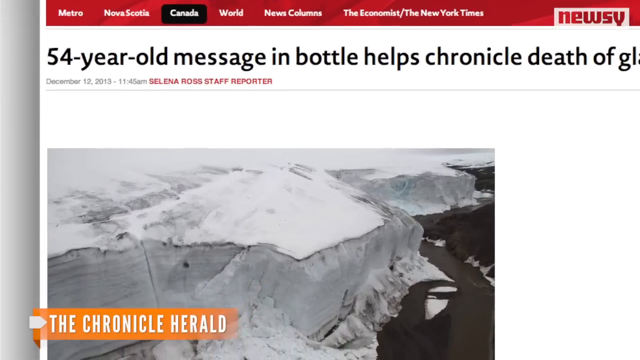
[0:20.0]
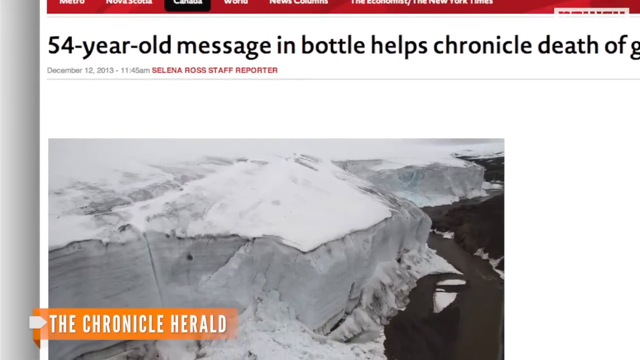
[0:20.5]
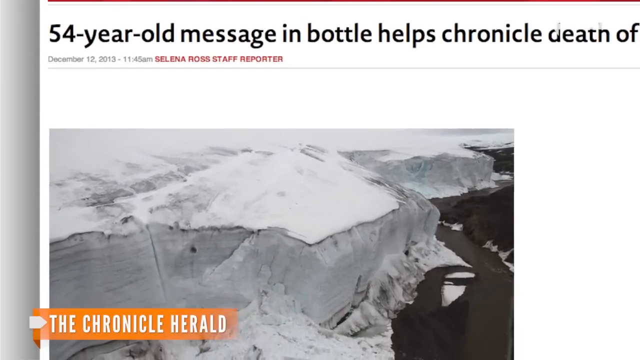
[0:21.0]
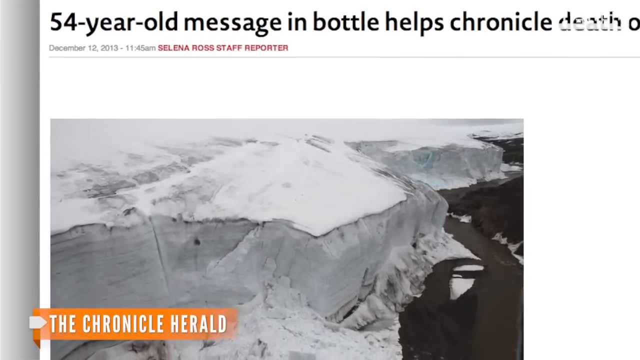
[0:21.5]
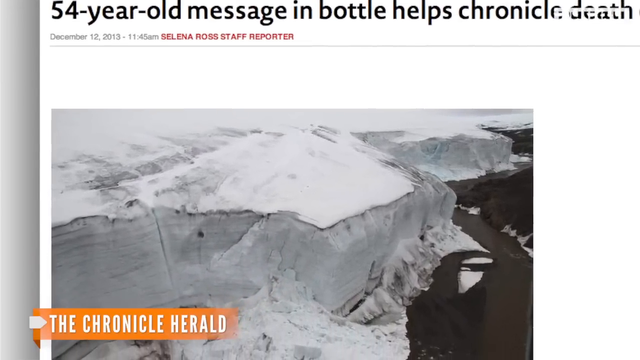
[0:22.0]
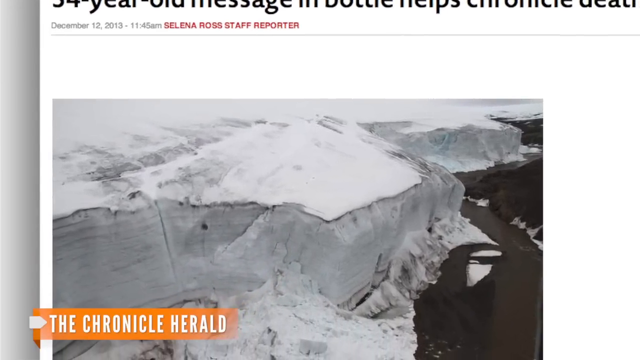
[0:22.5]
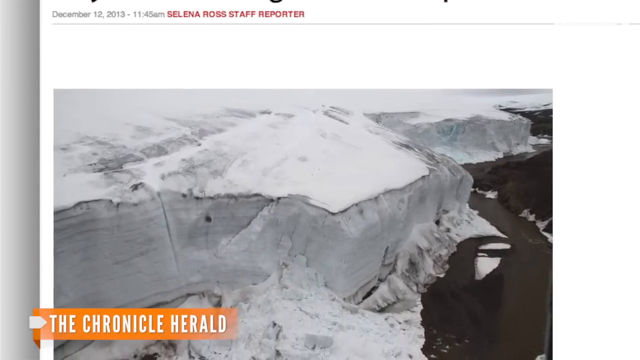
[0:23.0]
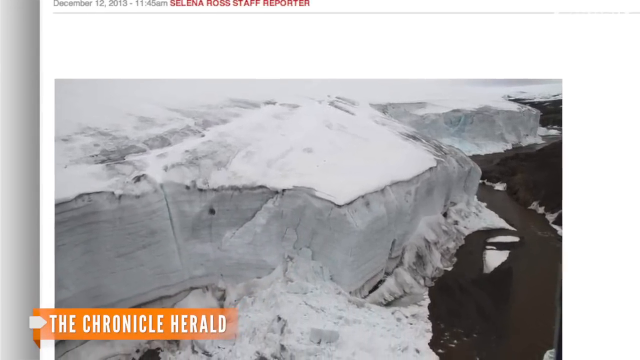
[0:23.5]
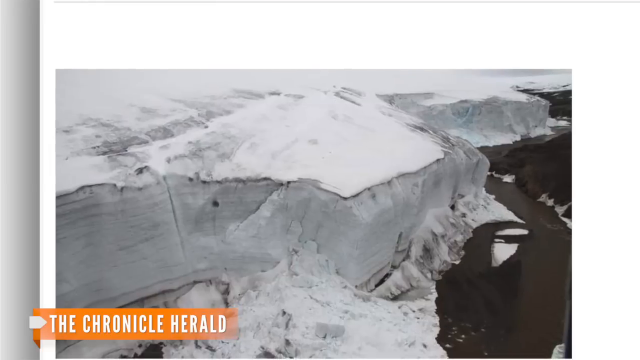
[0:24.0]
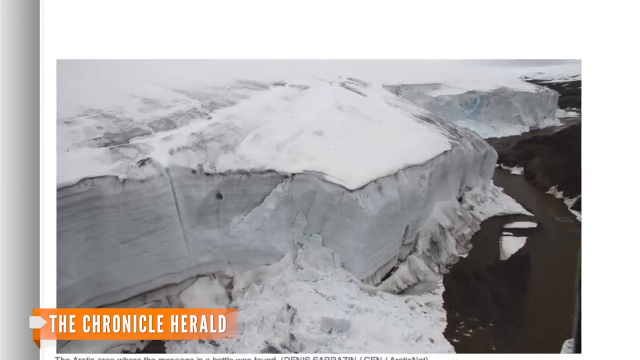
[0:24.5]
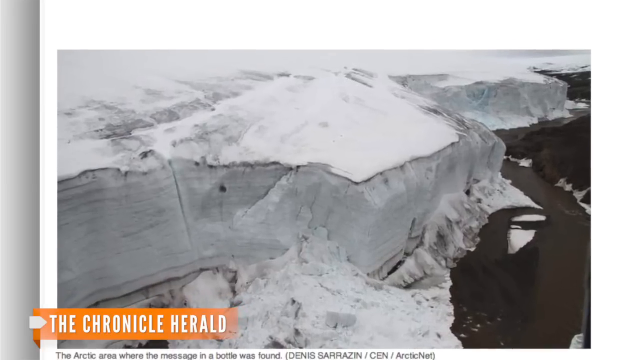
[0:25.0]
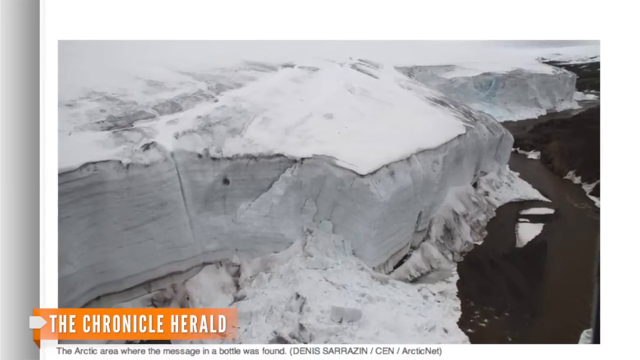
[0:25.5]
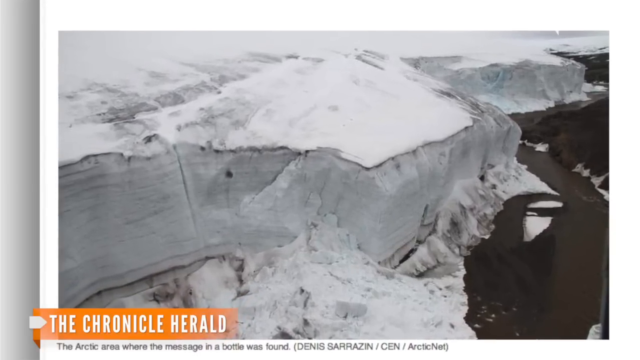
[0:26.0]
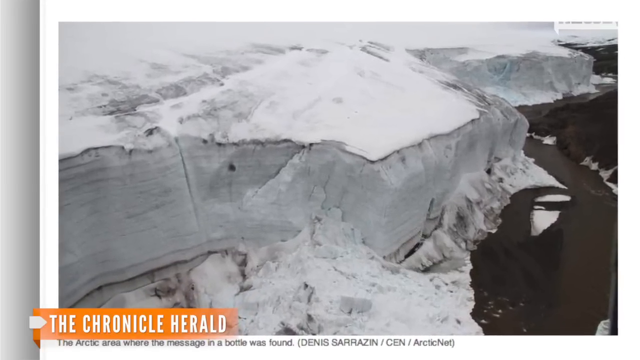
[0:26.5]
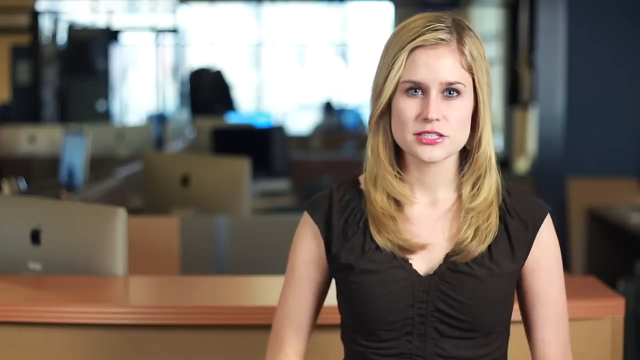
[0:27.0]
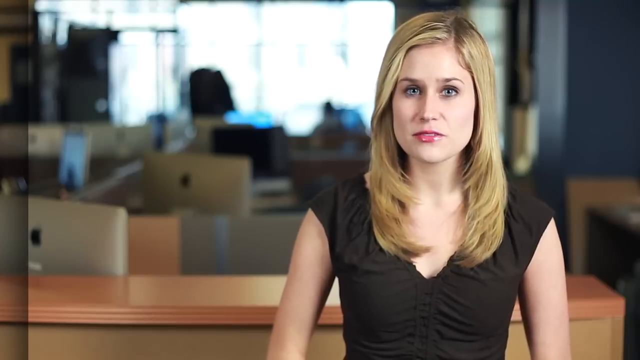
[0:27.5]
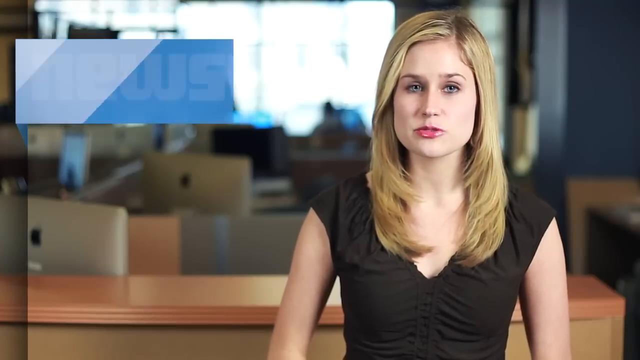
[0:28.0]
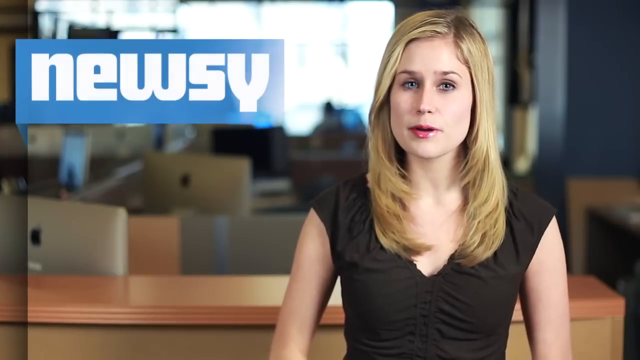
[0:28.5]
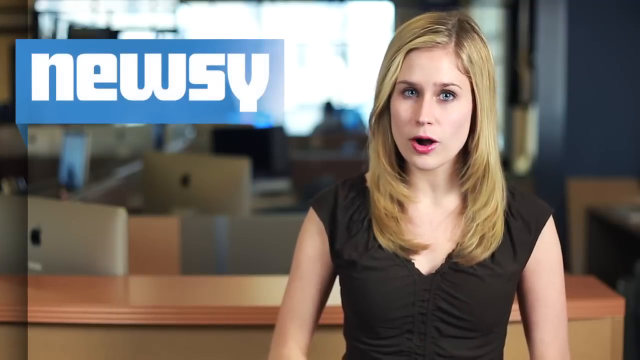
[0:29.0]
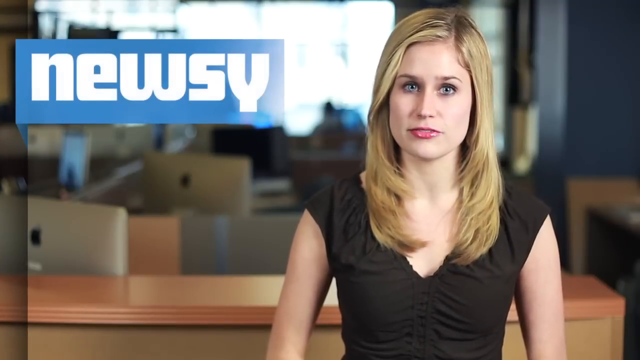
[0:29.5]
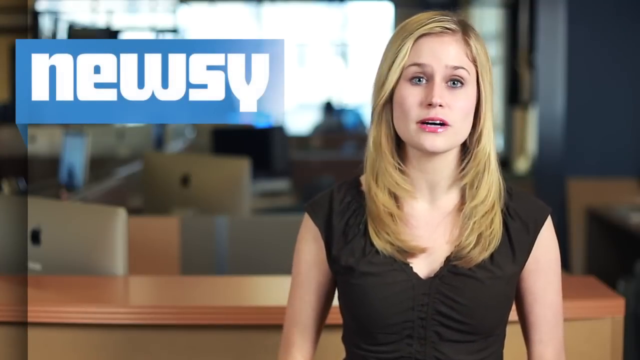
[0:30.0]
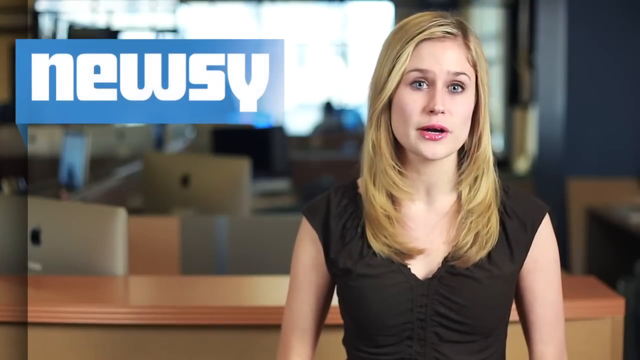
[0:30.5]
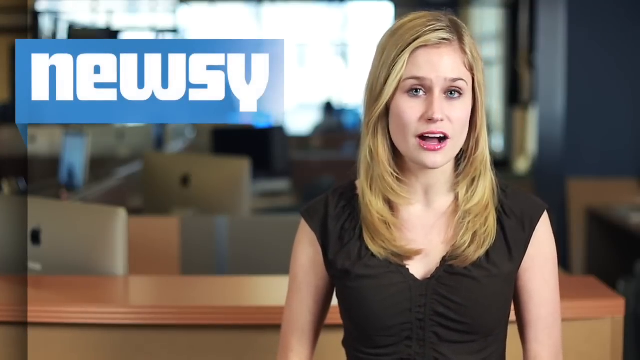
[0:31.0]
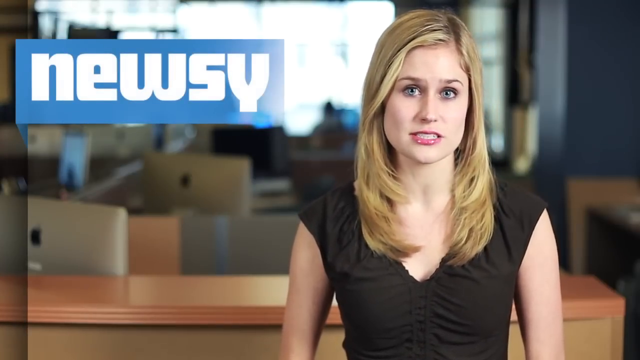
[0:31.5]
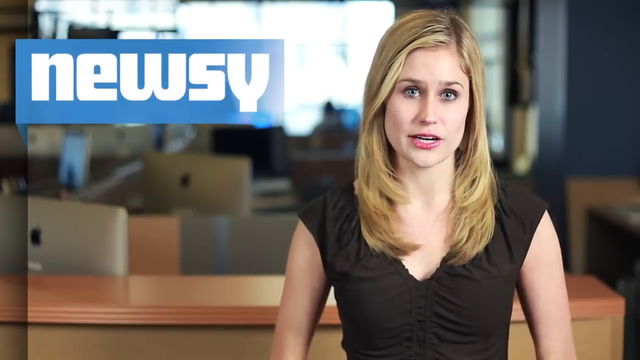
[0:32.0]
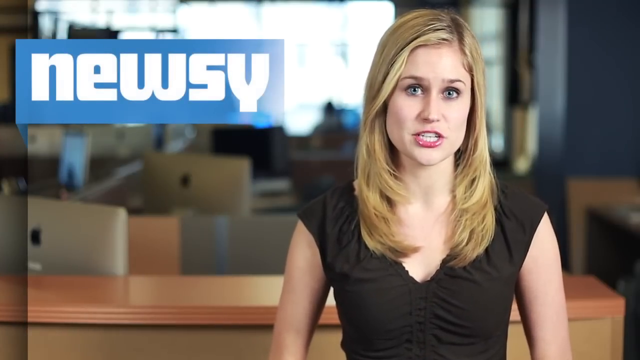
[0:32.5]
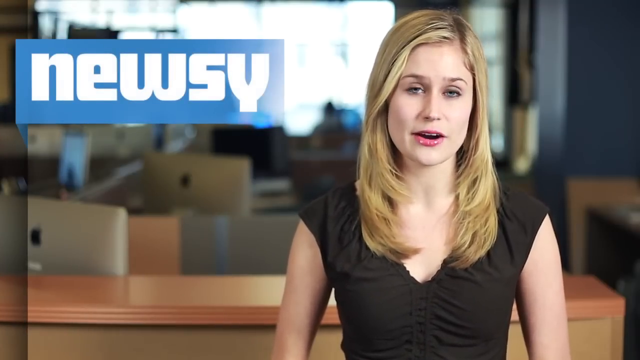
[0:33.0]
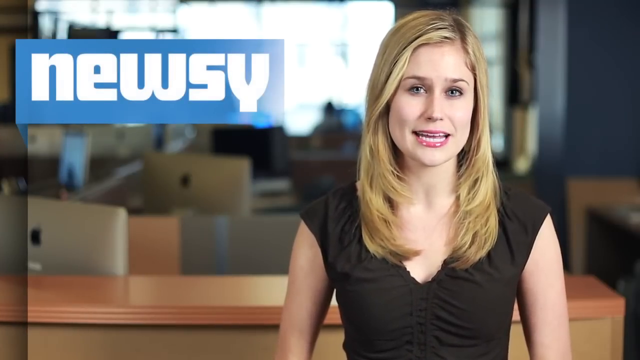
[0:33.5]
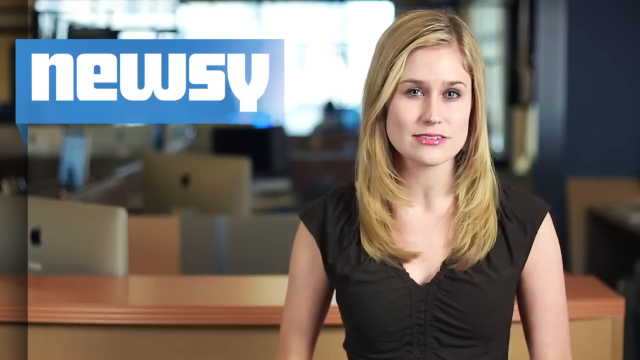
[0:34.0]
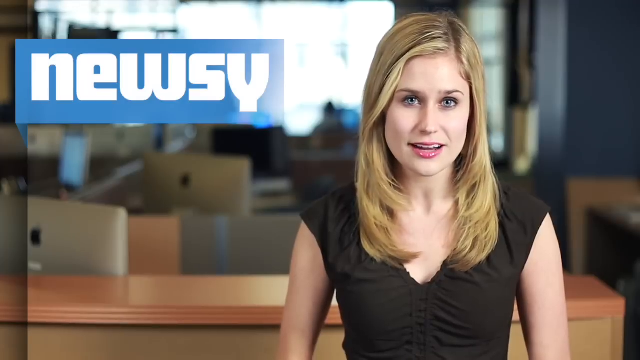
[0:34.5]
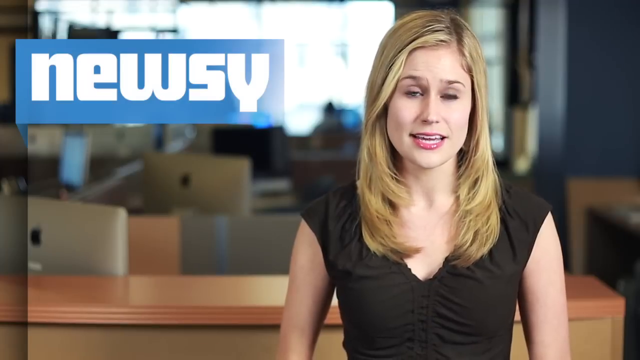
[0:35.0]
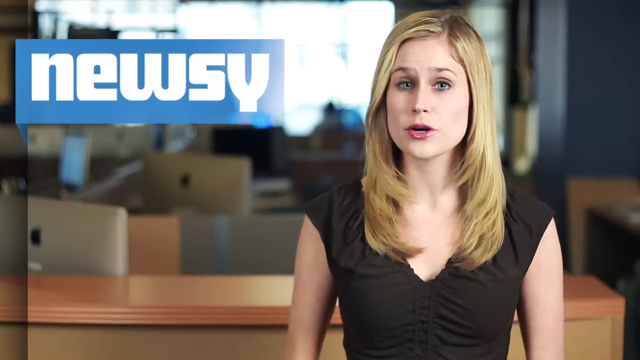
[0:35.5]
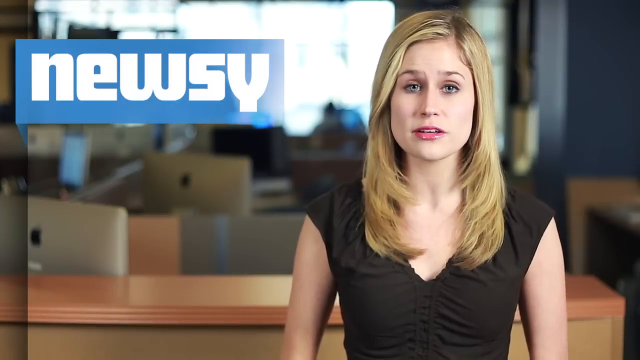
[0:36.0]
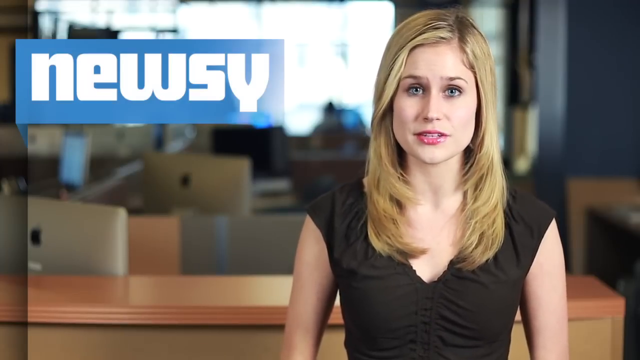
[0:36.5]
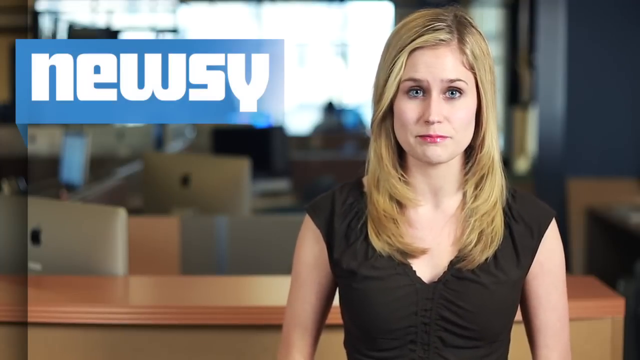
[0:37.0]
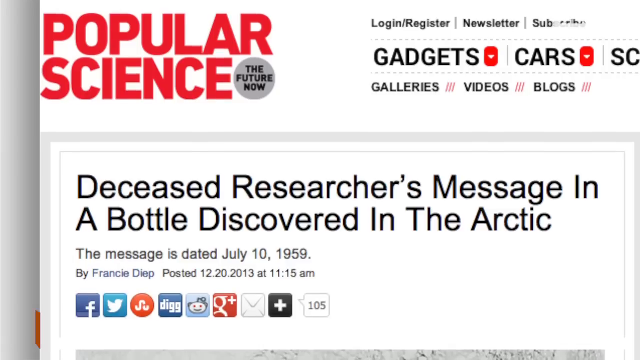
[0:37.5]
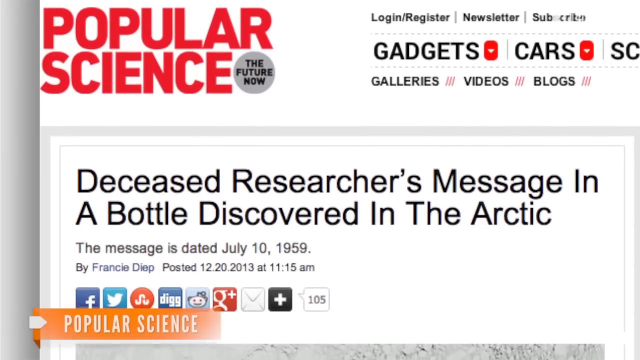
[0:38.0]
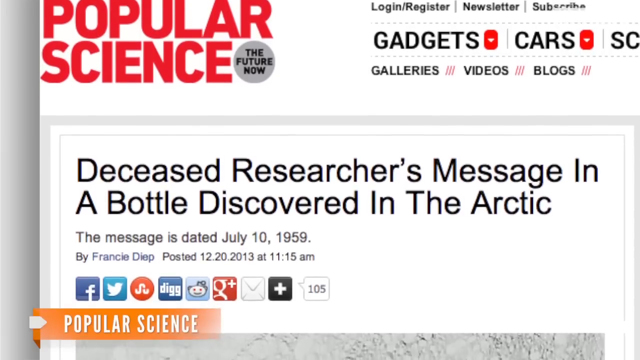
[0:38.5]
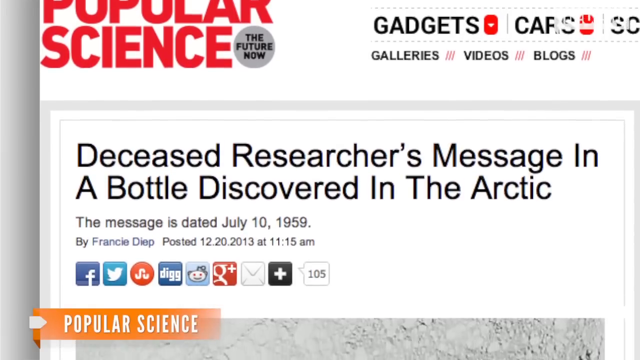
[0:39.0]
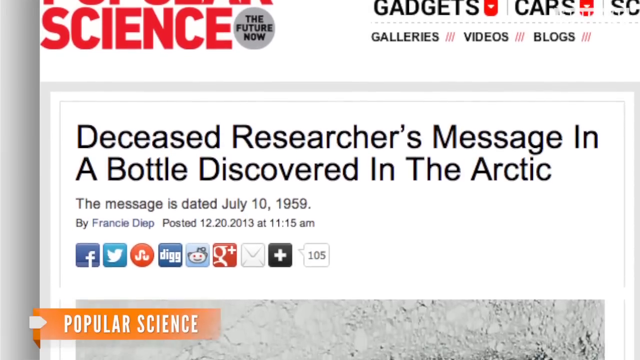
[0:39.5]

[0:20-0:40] The camera moves in on the picture of the glacier until the photo almost fills the screen. At the bottom of the screen, "the Chronicle Herald" appears in white font on a yellow background. The camera continues to focus on the glacier. The screen then switches back to the reporter, who is sitting or standing in front of a wooden desk, with multiple empty desks and Apple computers behind her. She juts her head forward, emphasizing a couple of times, and continues to speak, appearing to speak eloquently. The screen then switches to a page with the title "Popular Science" in red font at the top, followed by the headline "deceased researchers message in a bottle discovered in the Arctic," another article about the same message in a bottle.